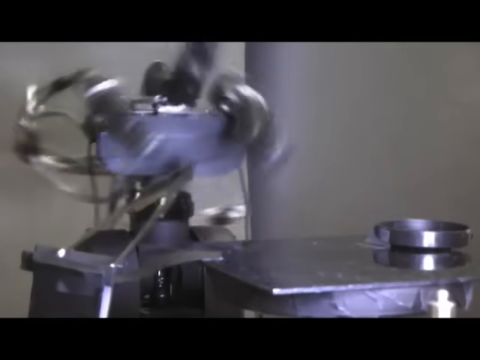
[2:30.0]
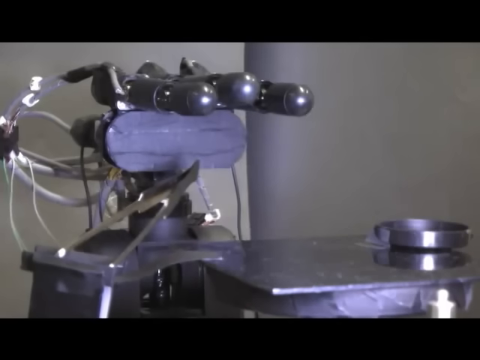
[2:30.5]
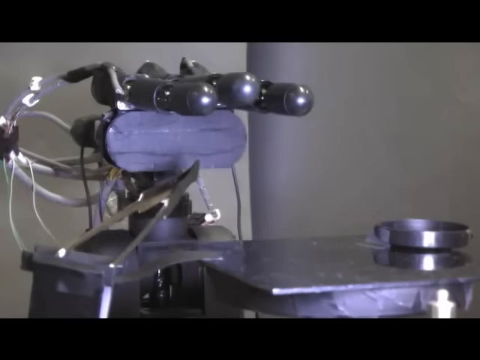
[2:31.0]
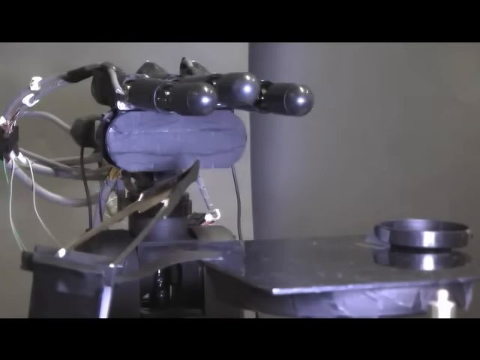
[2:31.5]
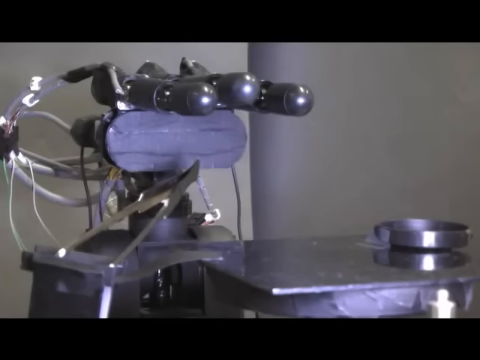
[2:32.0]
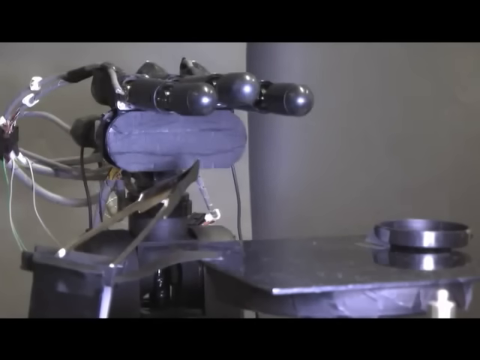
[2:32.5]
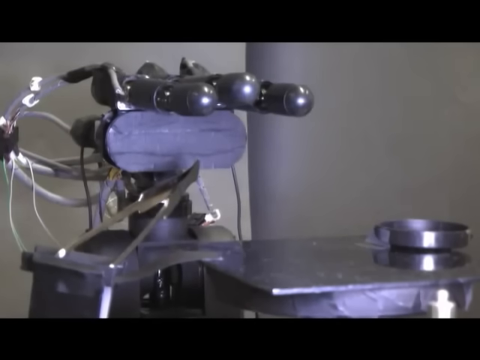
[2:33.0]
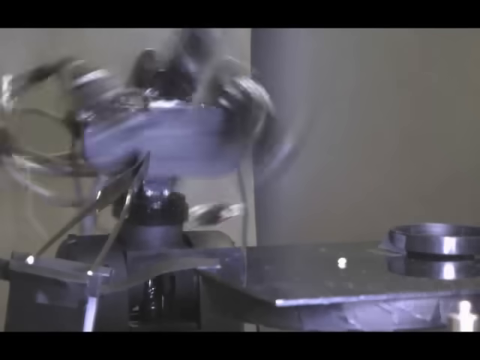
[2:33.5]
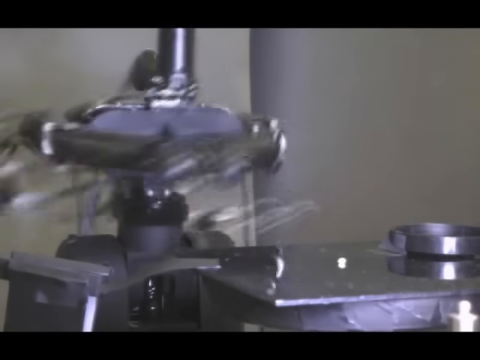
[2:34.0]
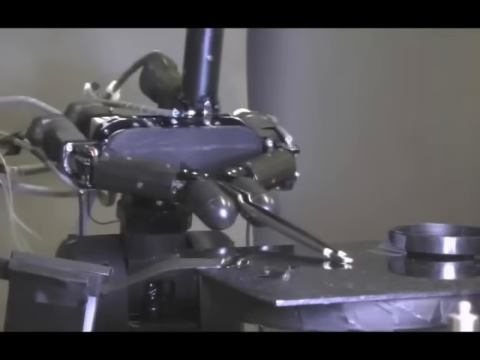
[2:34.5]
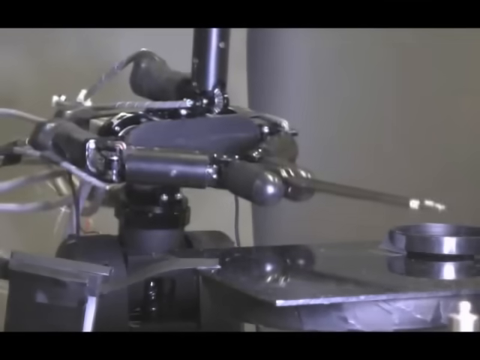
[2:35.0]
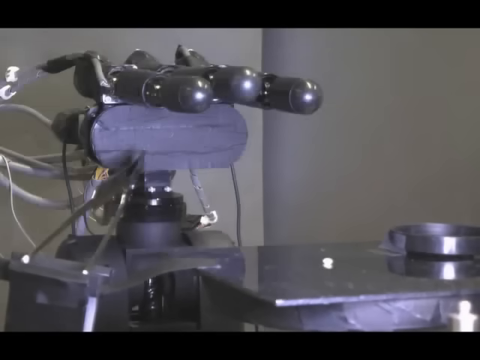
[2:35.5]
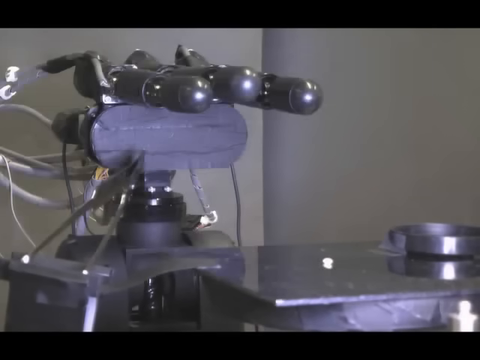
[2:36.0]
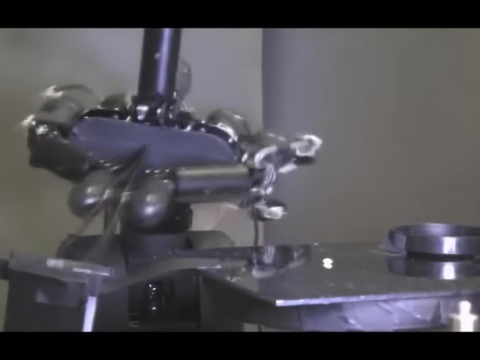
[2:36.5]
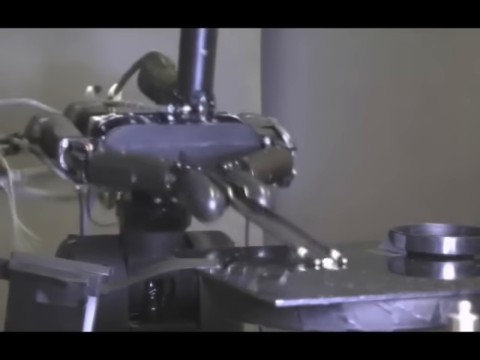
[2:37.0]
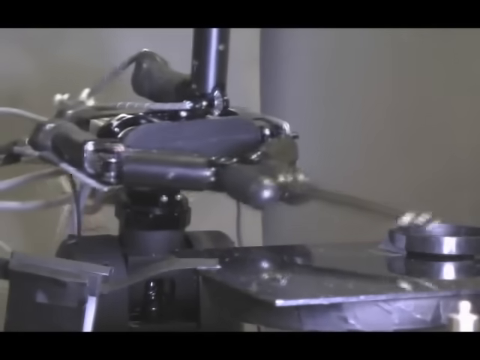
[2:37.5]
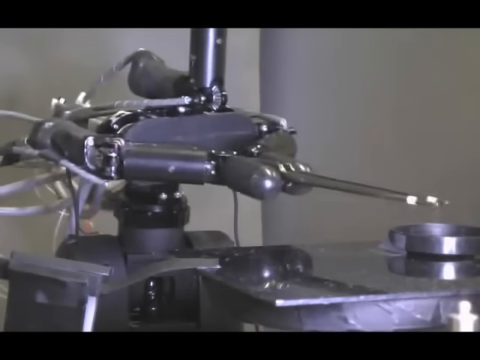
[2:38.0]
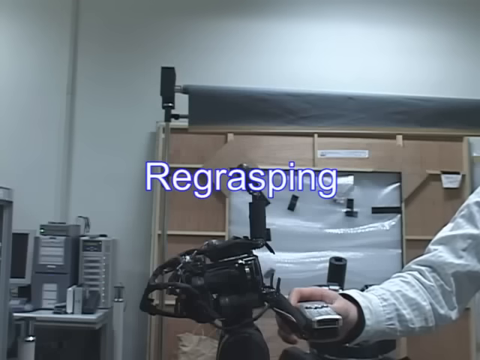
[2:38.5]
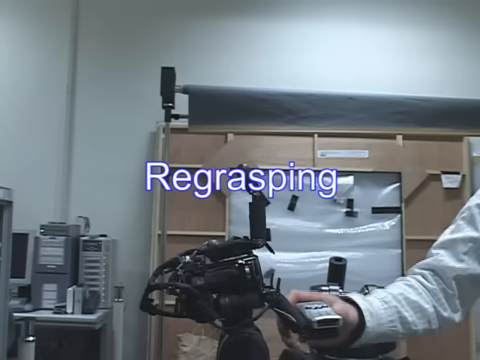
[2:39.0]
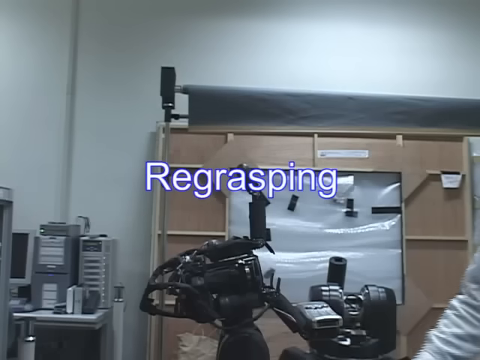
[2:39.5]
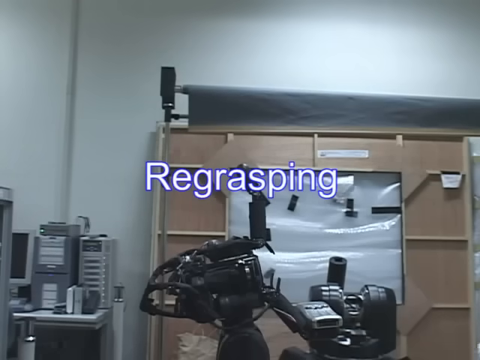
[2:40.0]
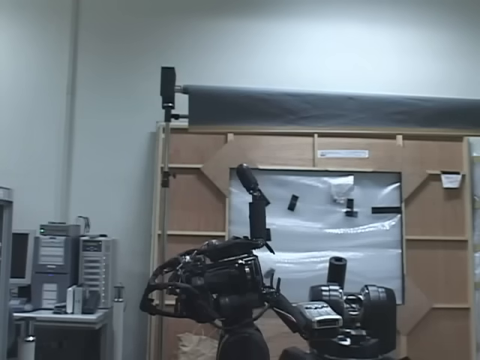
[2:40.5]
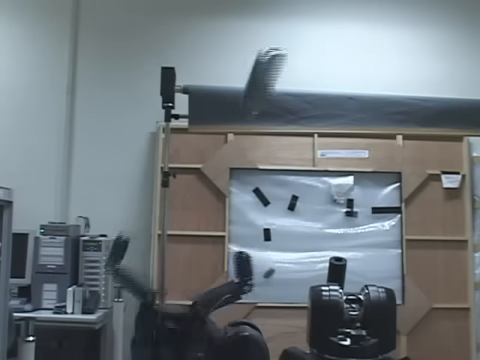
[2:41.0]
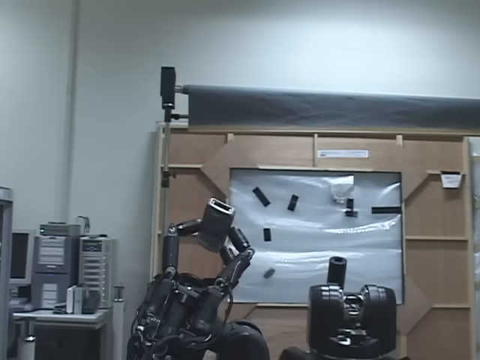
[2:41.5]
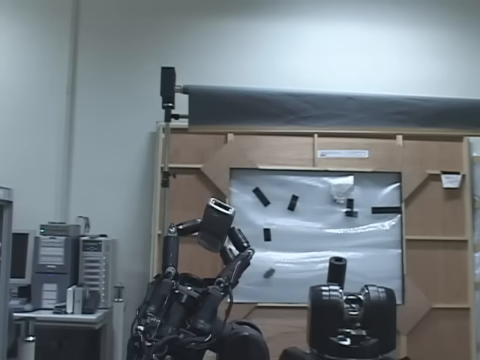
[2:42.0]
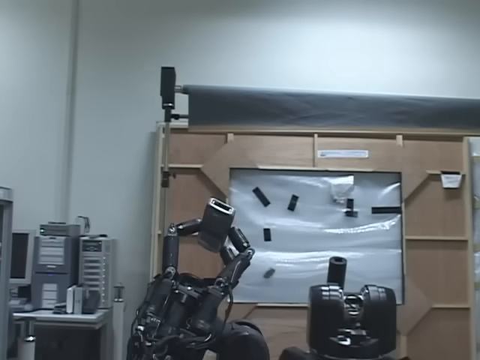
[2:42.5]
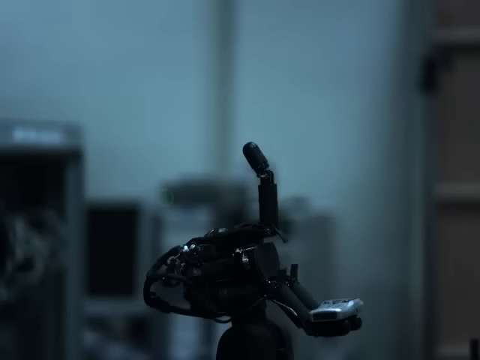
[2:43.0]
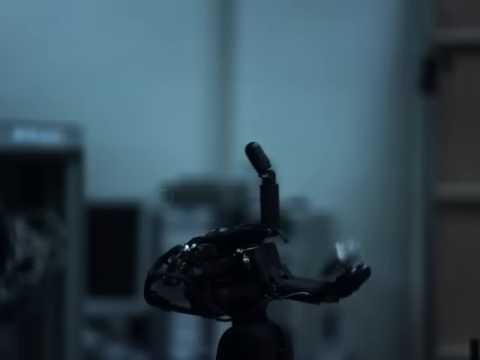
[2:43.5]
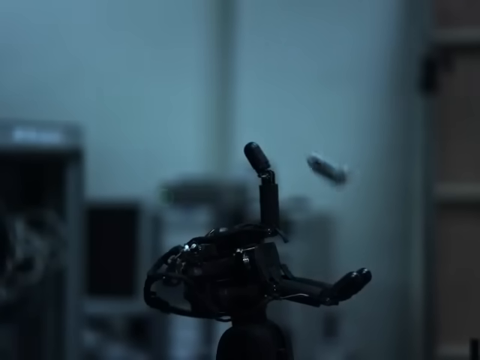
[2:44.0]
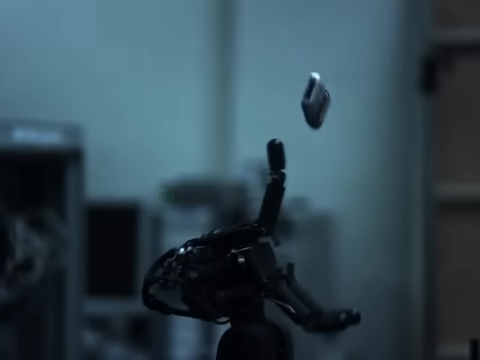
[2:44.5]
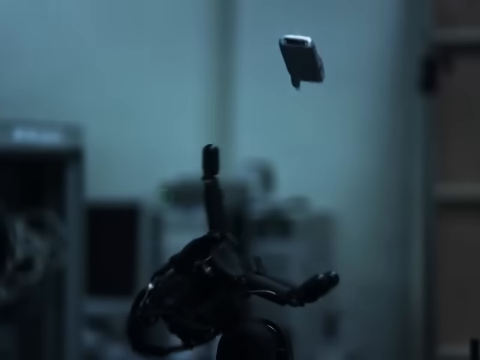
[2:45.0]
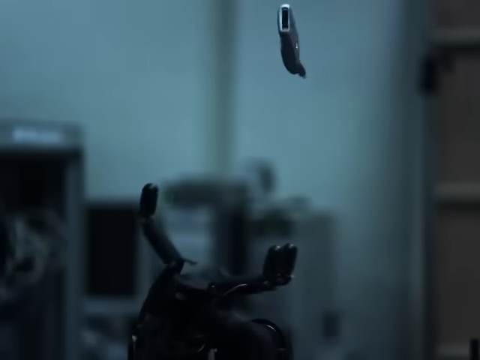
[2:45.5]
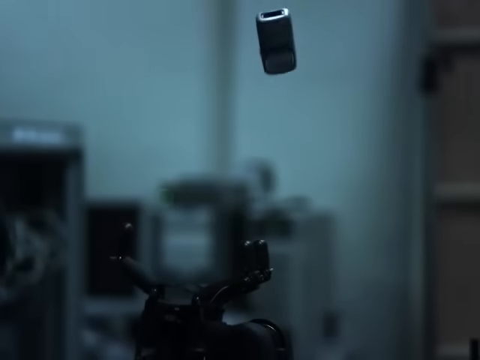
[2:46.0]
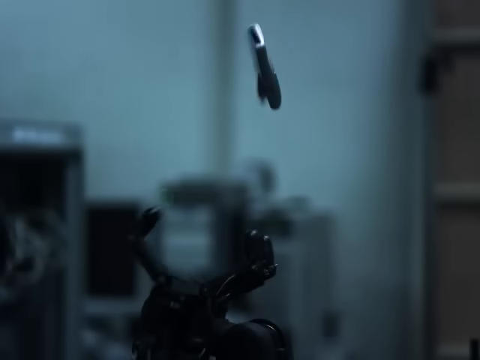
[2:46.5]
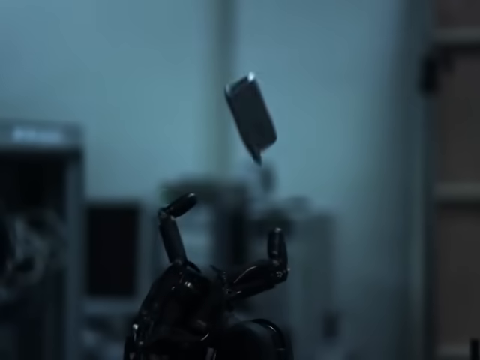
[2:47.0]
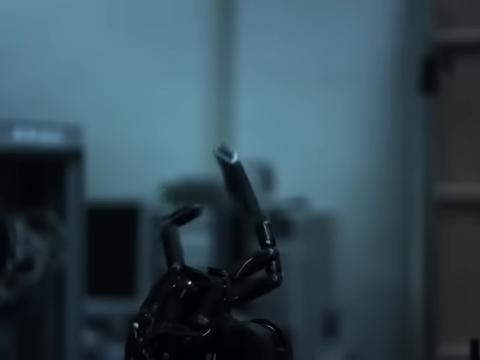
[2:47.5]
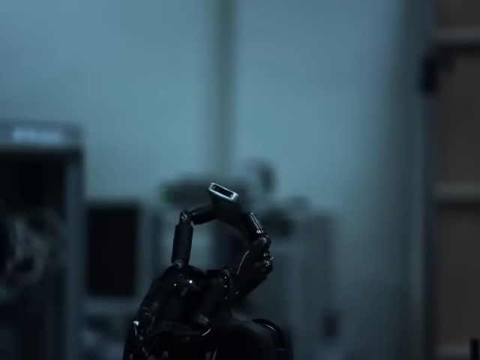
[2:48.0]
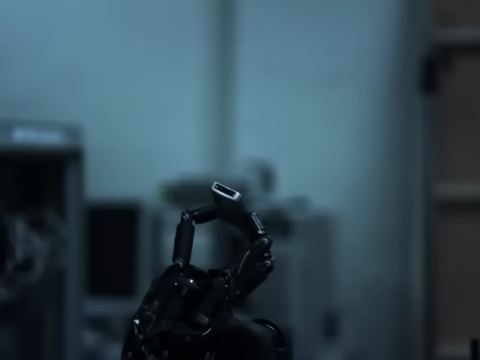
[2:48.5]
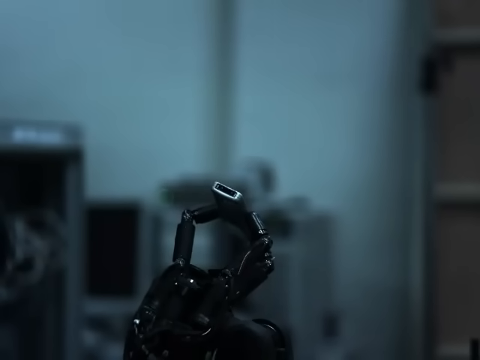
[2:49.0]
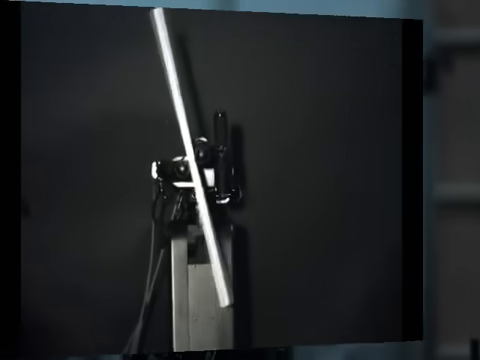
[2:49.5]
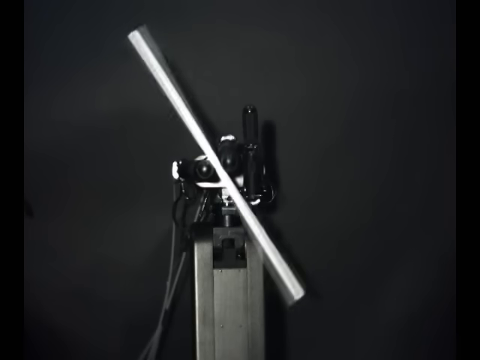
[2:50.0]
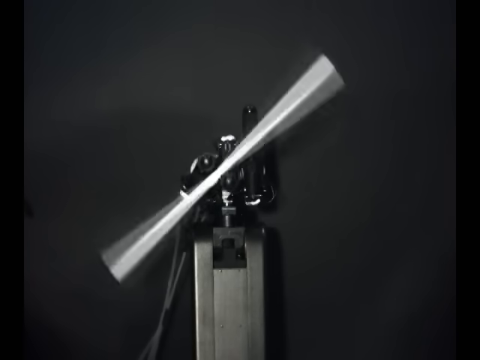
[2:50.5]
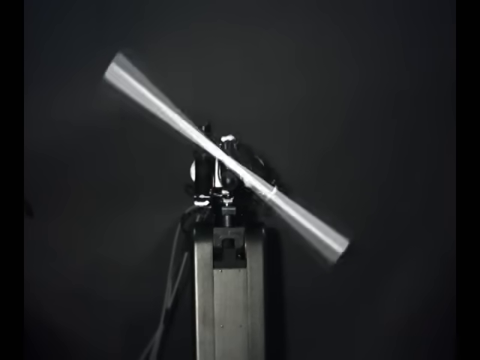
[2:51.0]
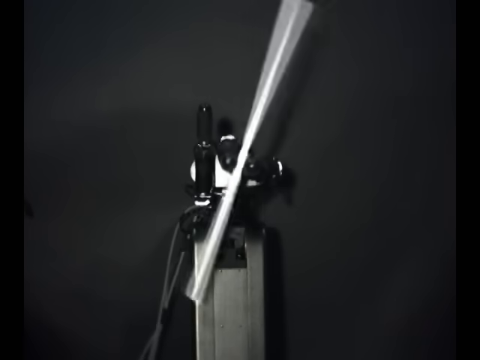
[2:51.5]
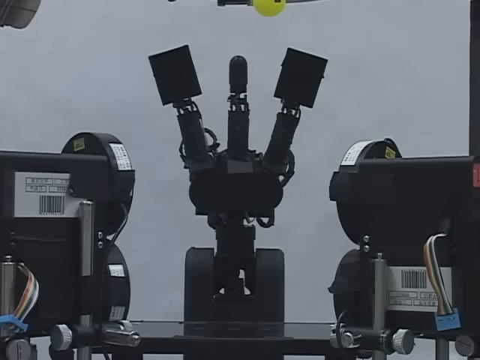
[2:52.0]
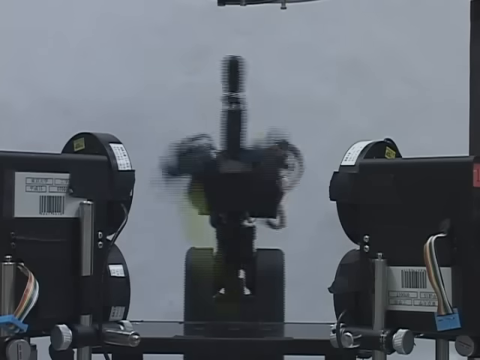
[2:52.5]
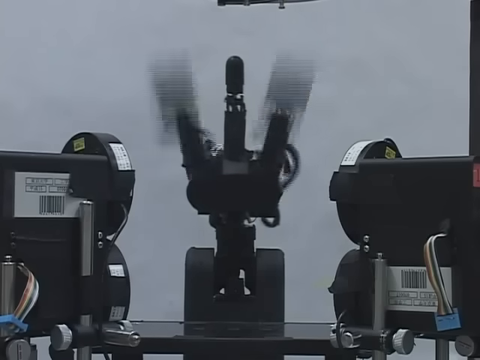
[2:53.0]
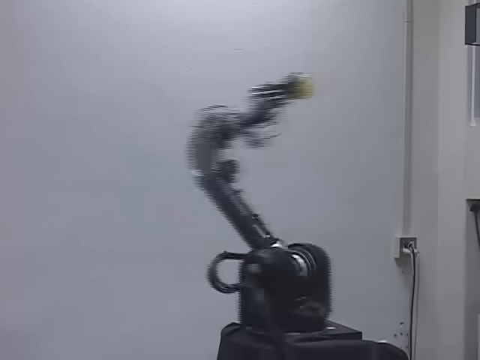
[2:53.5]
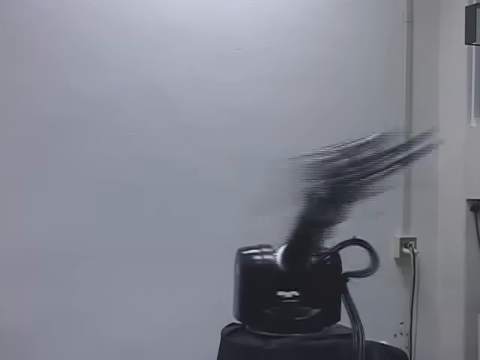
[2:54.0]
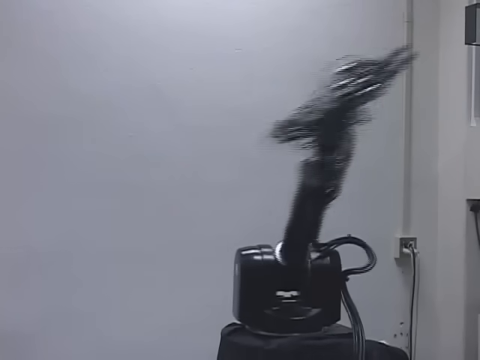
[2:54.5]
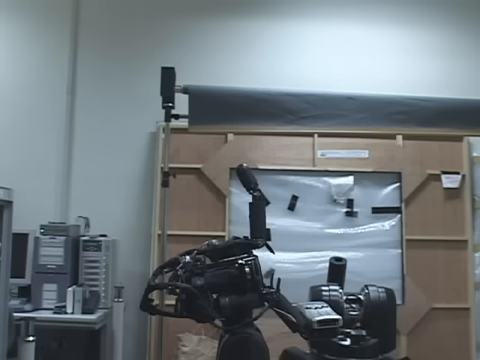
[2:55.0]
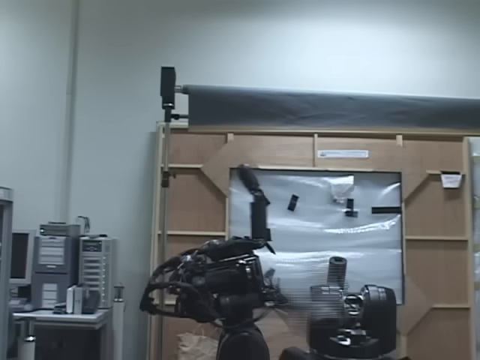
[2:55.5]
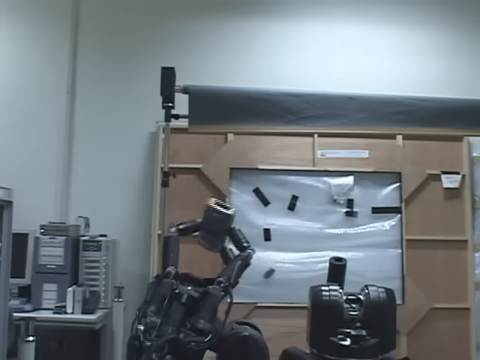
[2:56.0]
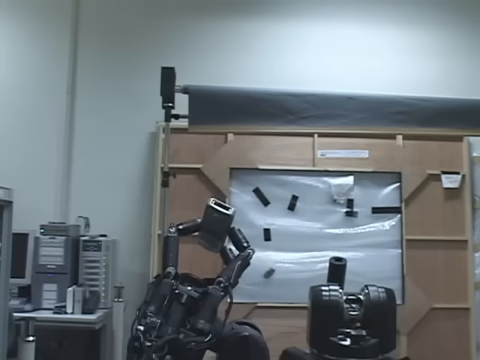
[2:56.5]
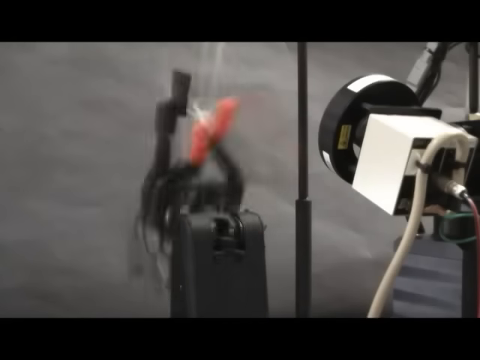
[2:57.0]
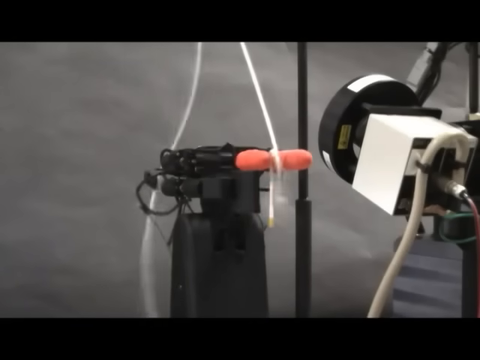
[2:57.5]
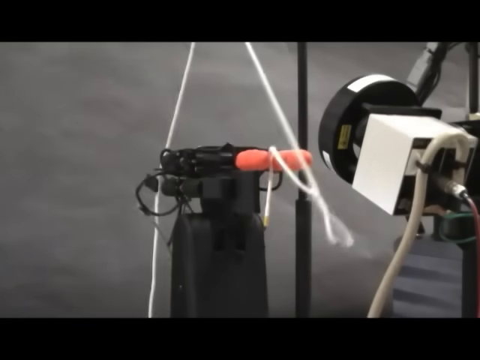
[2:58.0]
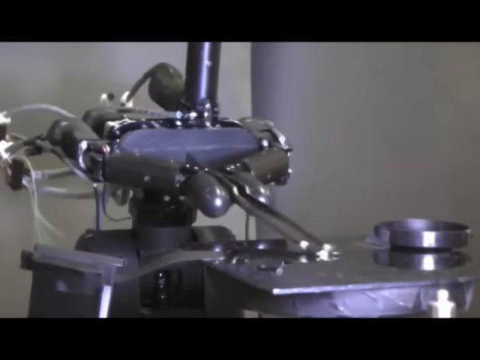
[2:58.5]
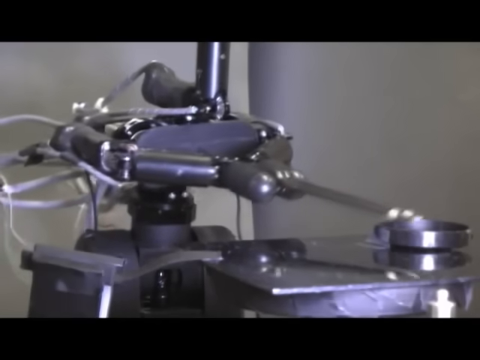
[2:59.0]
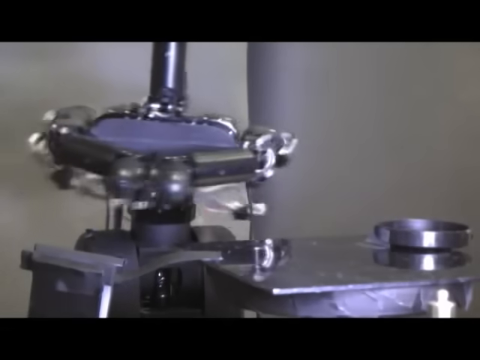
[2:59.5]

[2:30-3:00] The robot holding the tweezers picks something up and puts it into what looks to be some type of cylindrical bowl; the item looks to be a tiny white ball, which the robot kind of moves over toward the right side of the screen and drops into the container. The re-grasping segment follows, with the word "re-grasping" in white lettering with a blue outlined graphic. A kind of wider view of the lab is shown, and somebody's hand comes on screen from the right side to turn on the robot. They walk away, and the robot throws a ball, or some type of object, up in the air and then catches it based on where the object is. The next scene maybe looks to be an overview of all the robotic functions: the twirling of the rod, juggling of the ball, throwing of a ball, throwing and catching of the object, tying a knot, and finally the tweezers footage before the video shuts off.